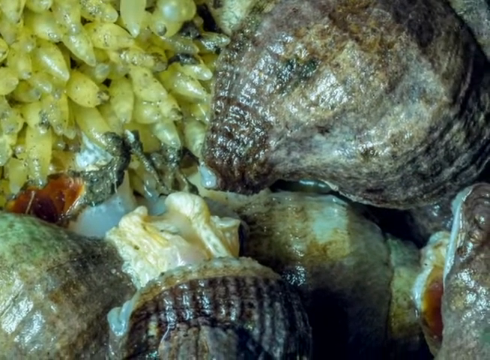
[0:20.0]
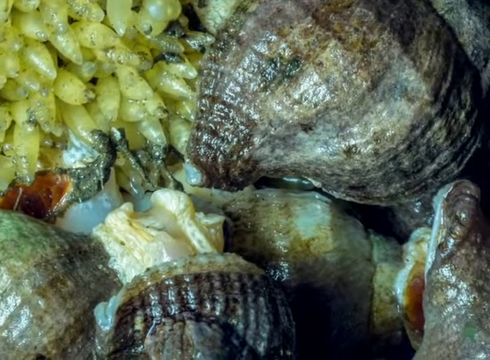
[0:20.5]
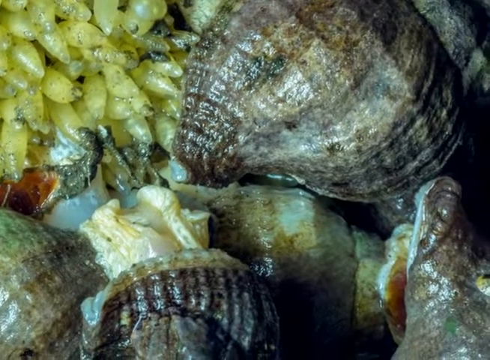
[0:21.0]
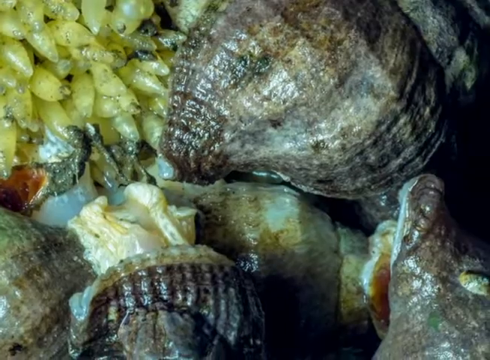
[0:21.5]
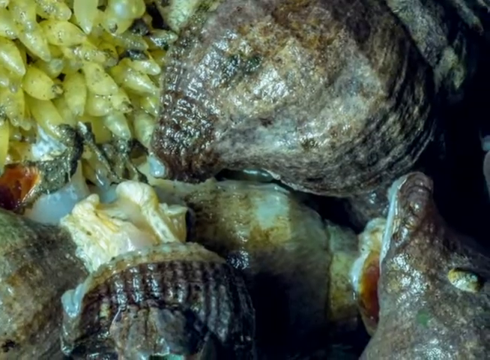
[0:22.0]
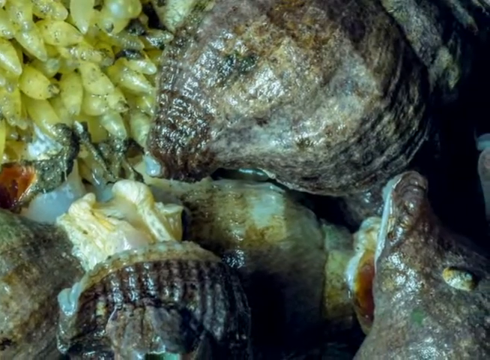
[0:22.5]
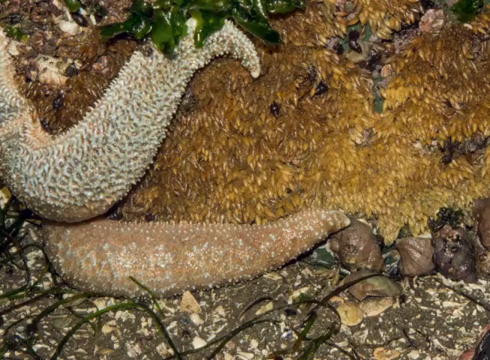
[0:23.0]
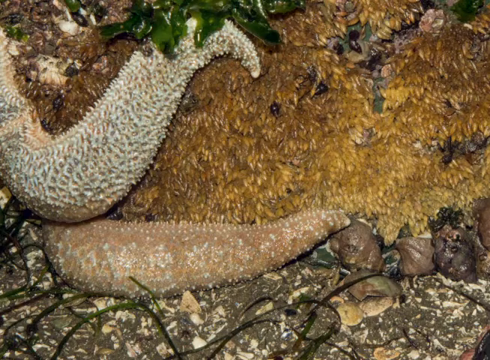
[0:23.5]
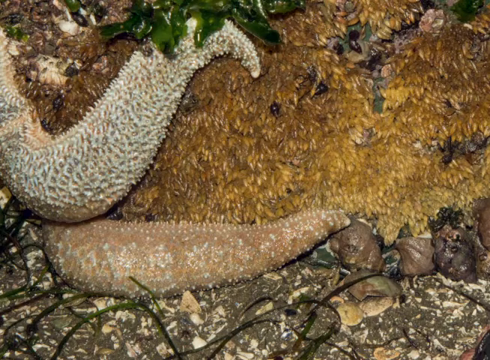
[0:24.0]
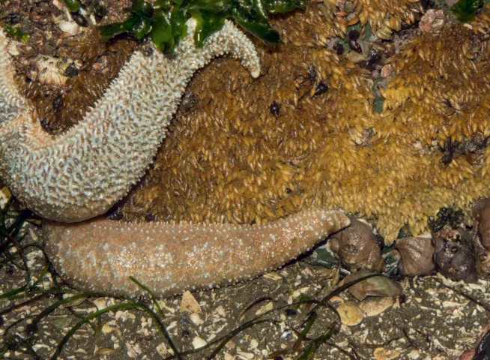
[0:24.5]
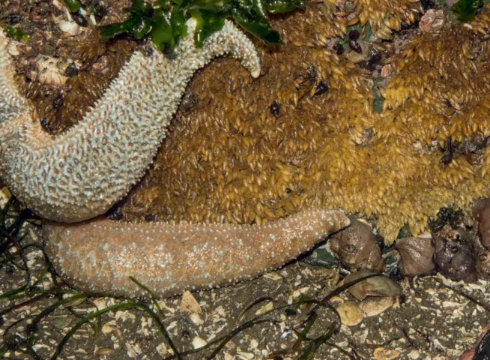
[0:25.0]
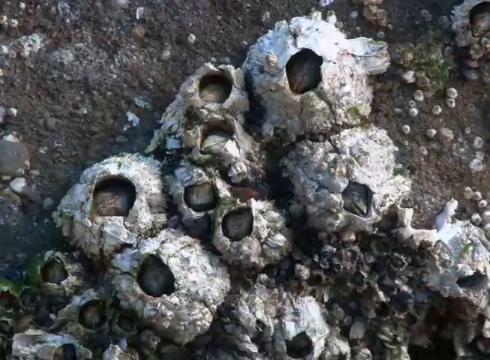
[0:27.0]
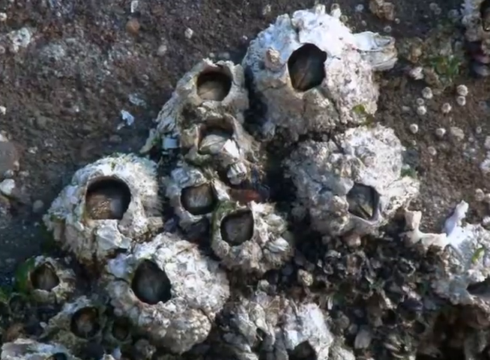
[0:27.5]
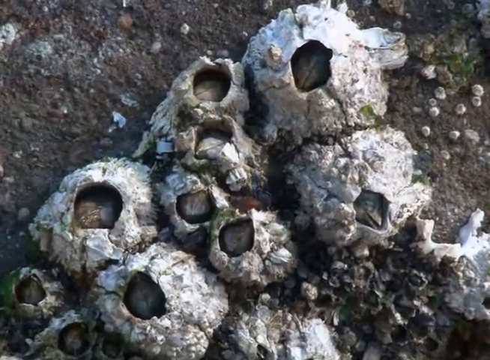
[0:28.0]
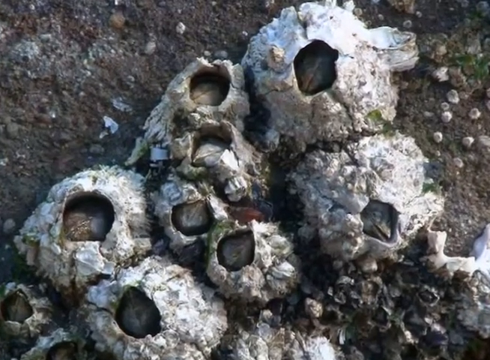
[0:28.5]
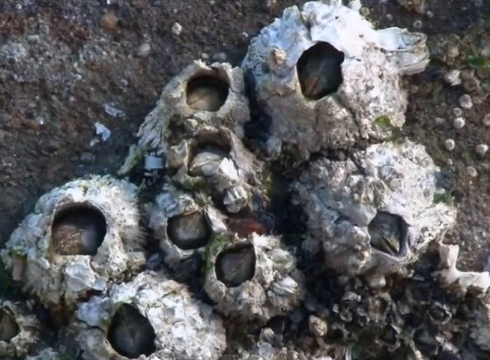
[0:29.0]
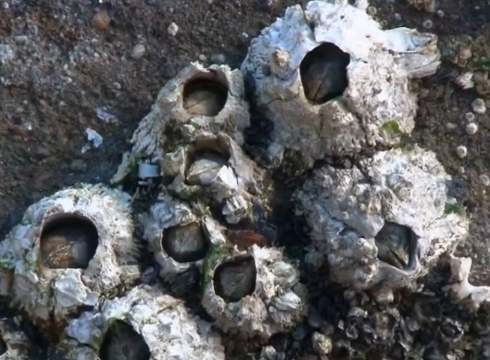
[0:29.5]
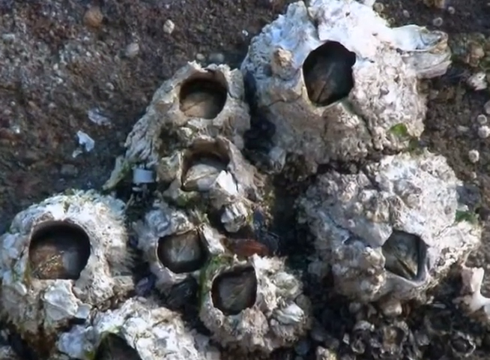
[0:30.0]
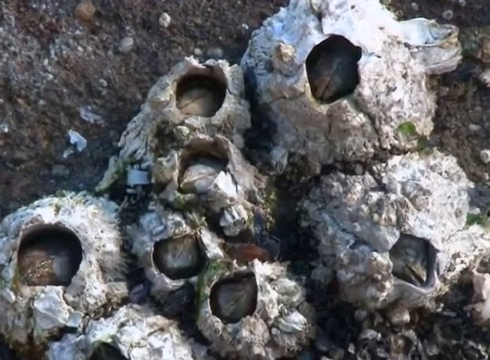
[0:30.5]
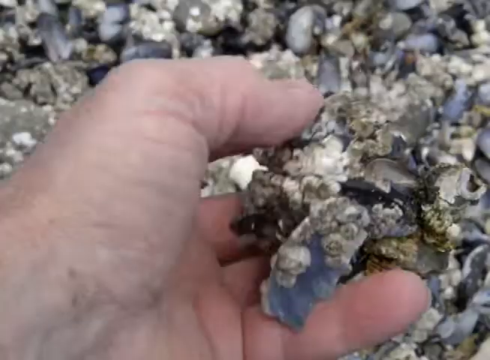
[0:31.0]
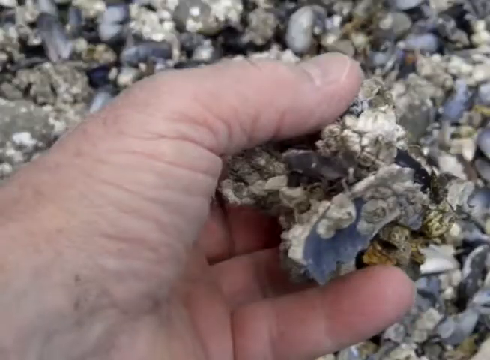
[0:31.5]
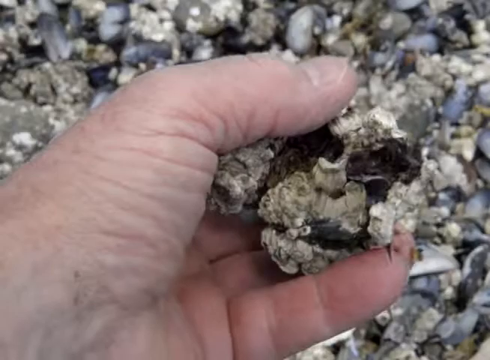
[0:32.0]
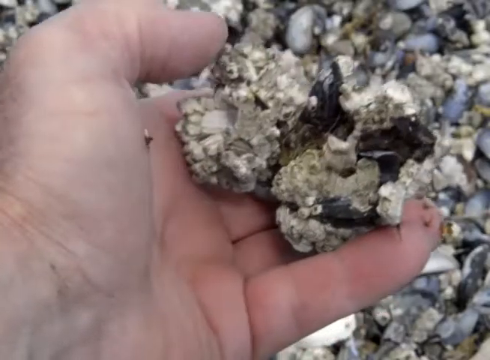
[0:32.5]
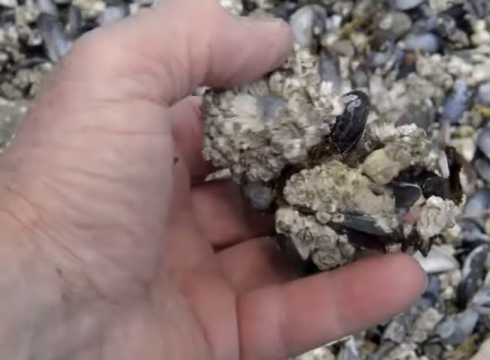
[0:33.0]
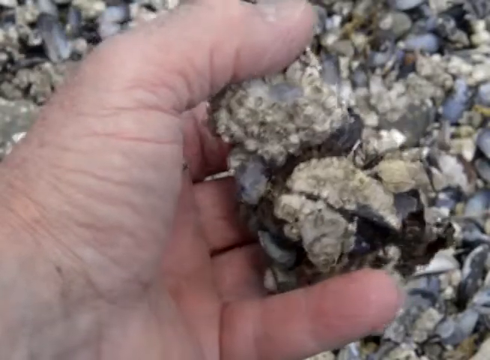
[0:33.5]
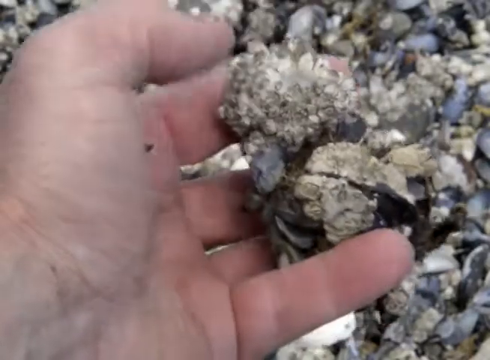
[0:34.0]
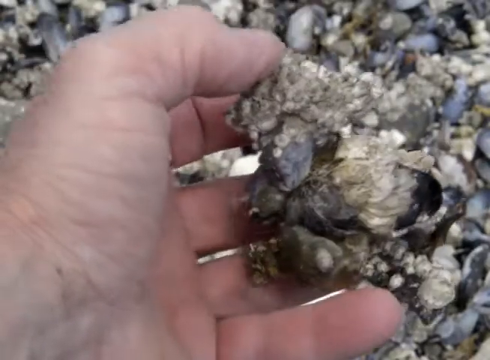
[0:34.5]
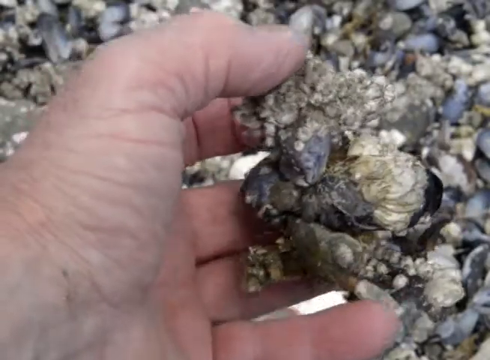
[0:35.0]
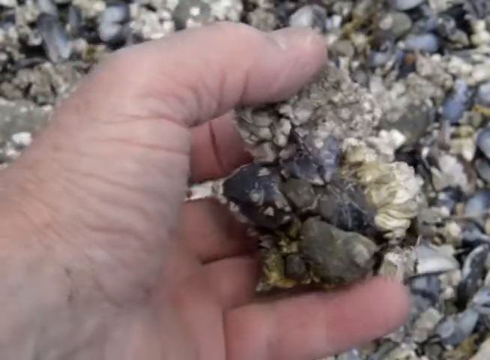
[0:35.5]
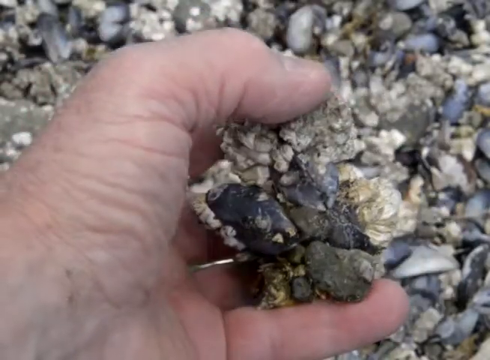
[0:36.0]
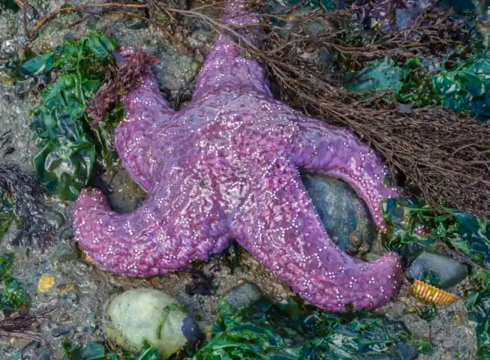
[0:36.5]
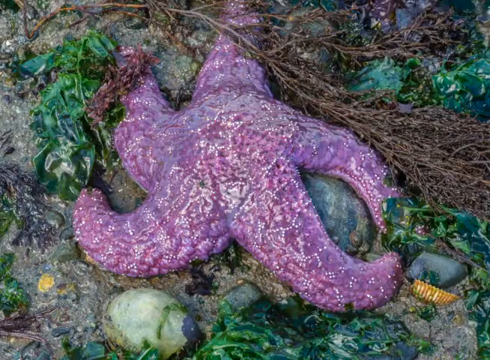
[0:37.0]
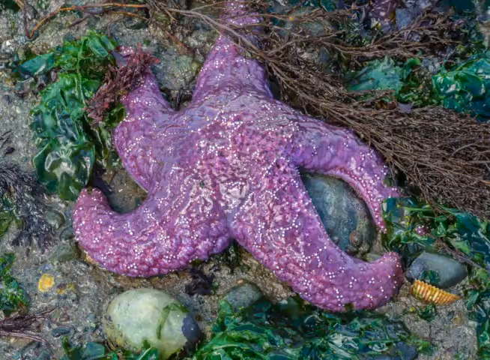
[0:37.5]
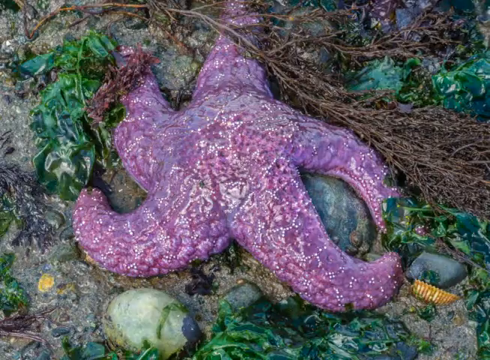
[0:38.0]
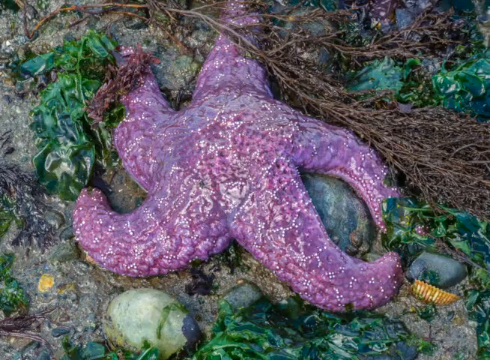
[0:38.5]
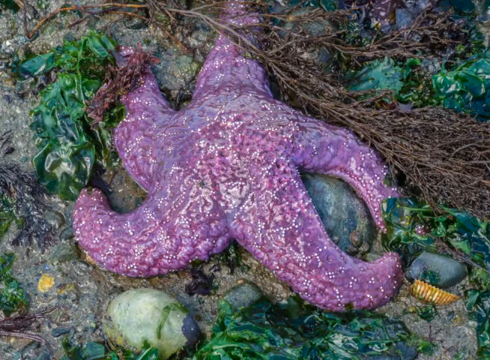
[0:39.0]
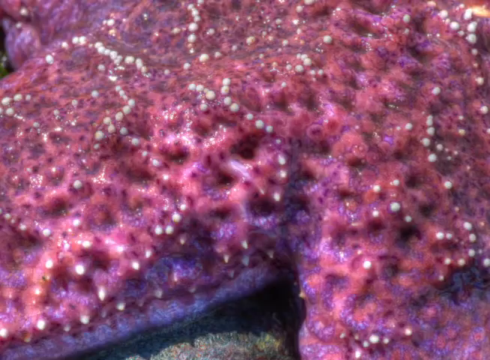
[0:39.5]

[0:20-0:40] More underwater creatures are shown, along with some eggs that have not hatched. A human hand holds one of the creatures: a white man holds what looks like some bones, keeps moving them in his hand and shows them closer to the camera. The camera moves from one scene to the other, showing the different creatures, including one that looks red with yellow and white dots on the surface of its skin.